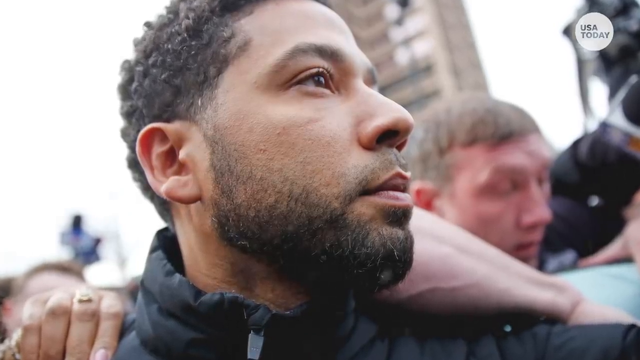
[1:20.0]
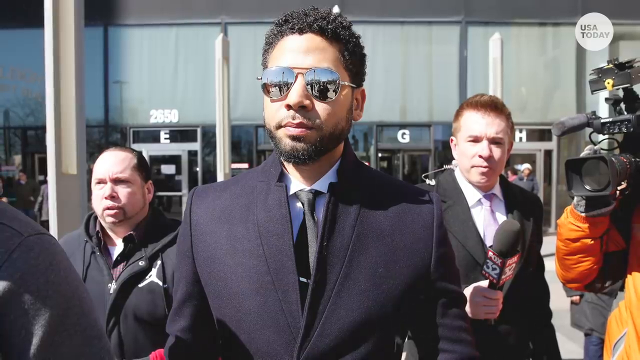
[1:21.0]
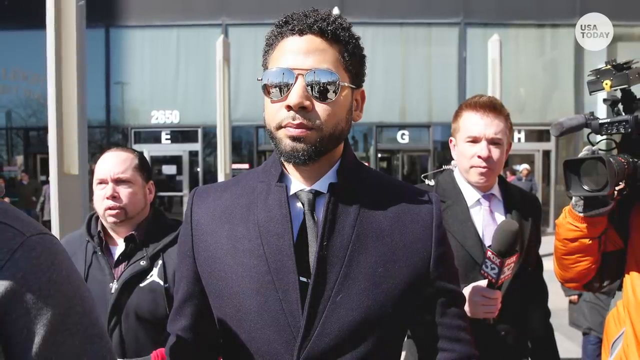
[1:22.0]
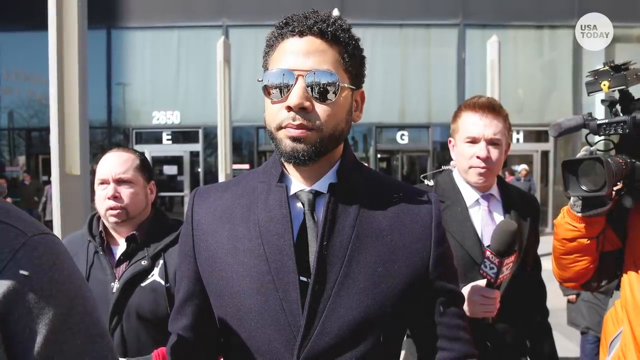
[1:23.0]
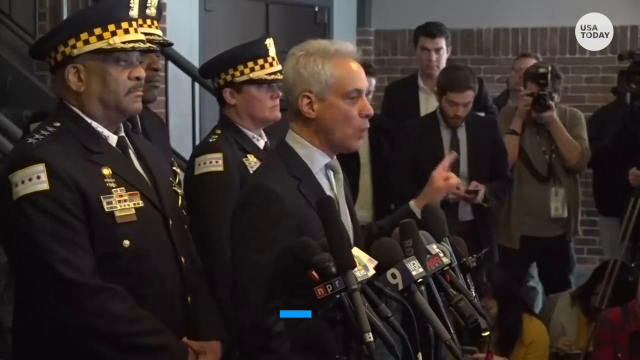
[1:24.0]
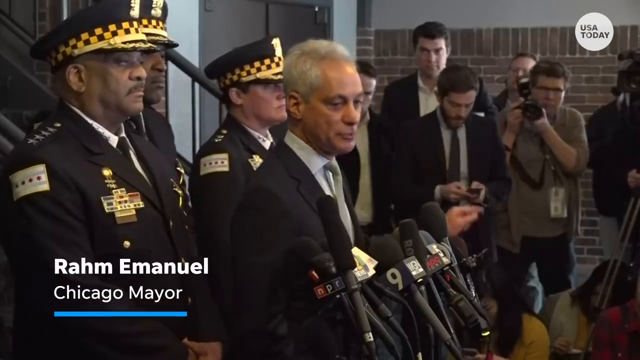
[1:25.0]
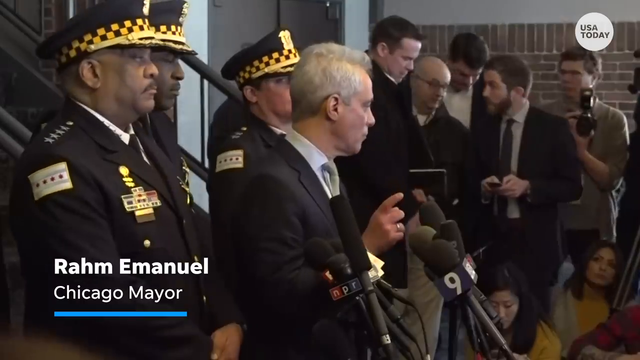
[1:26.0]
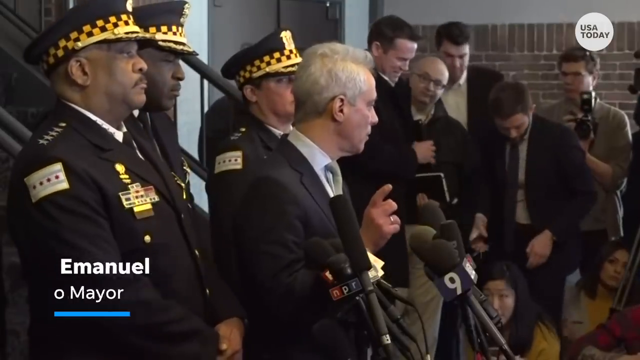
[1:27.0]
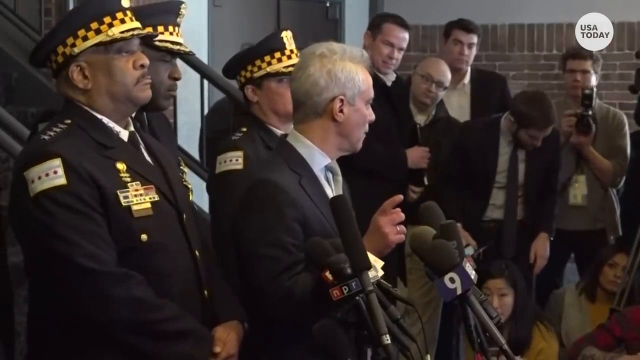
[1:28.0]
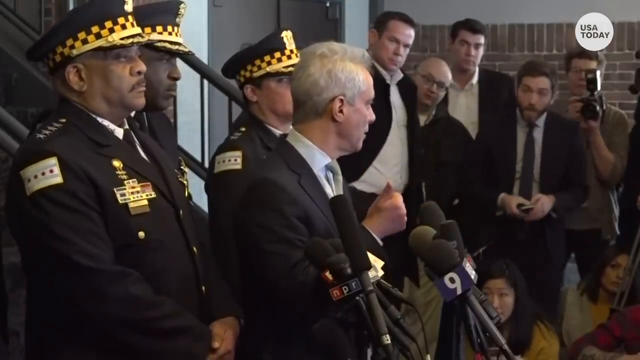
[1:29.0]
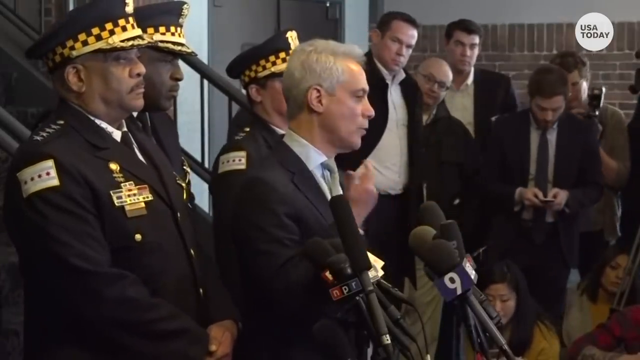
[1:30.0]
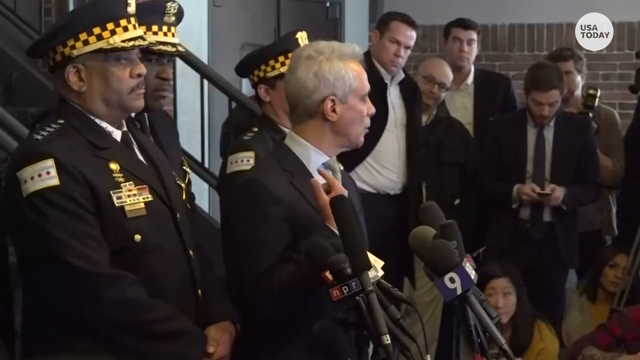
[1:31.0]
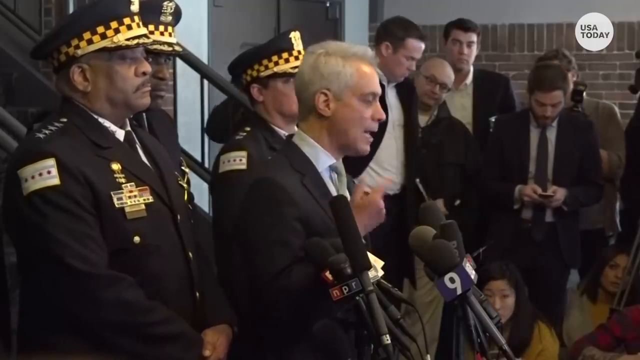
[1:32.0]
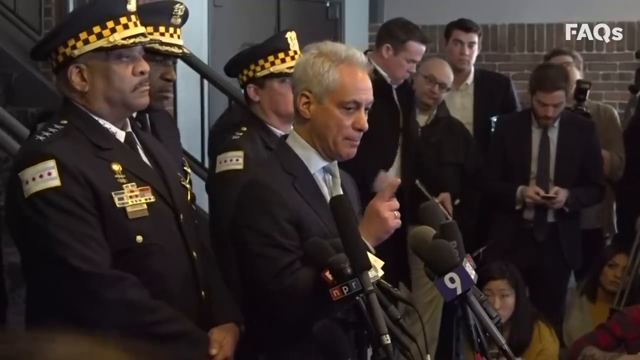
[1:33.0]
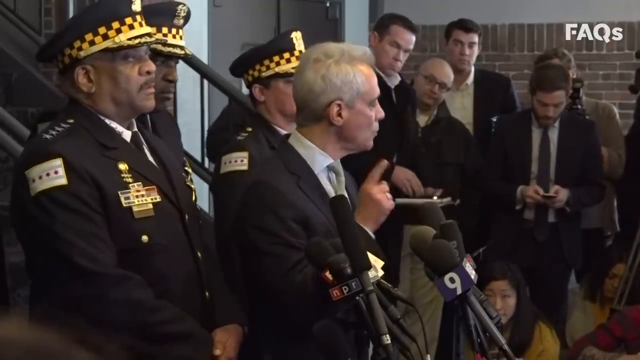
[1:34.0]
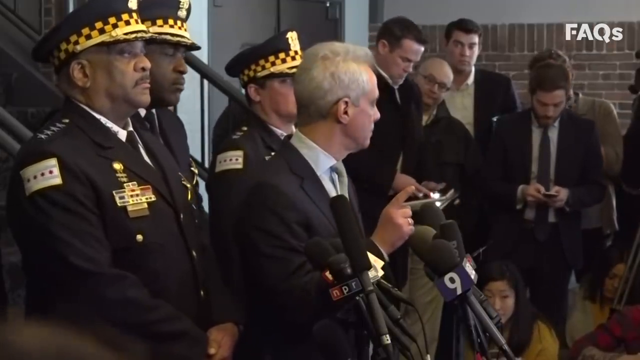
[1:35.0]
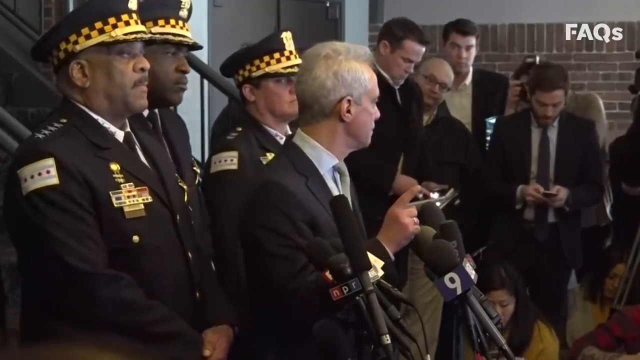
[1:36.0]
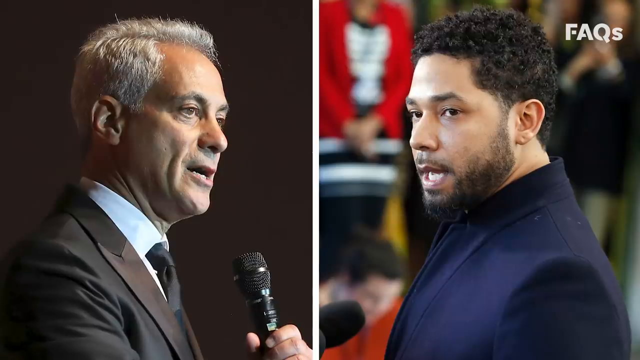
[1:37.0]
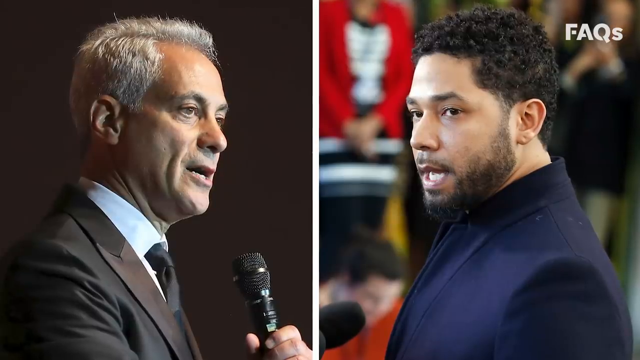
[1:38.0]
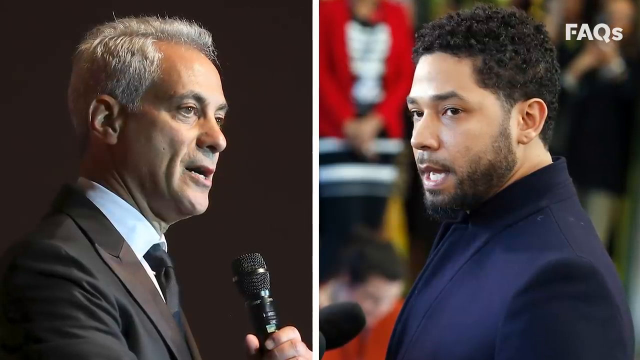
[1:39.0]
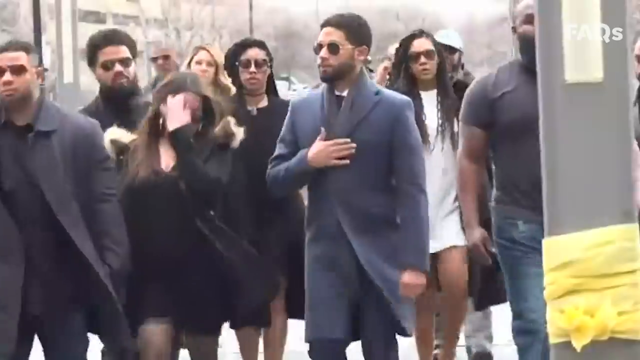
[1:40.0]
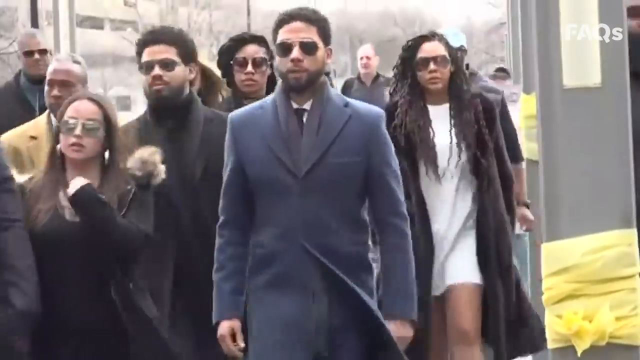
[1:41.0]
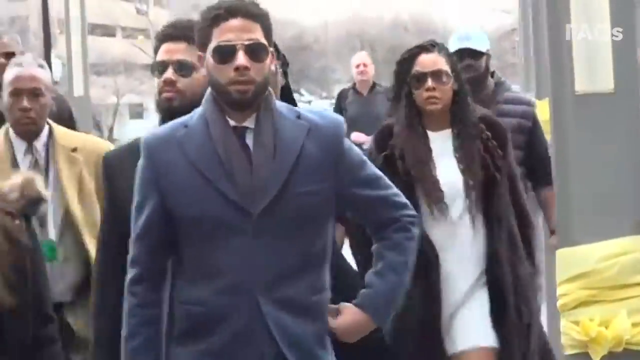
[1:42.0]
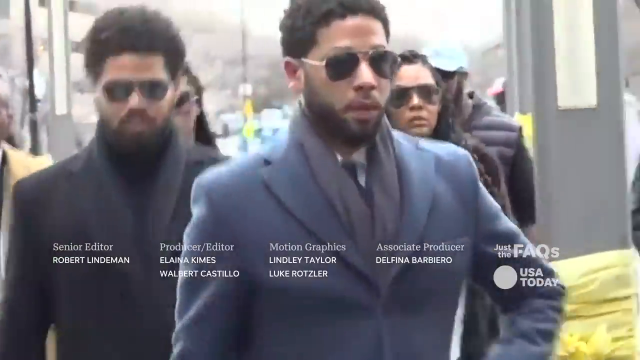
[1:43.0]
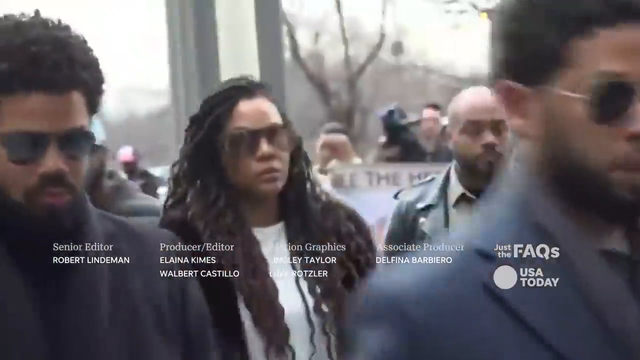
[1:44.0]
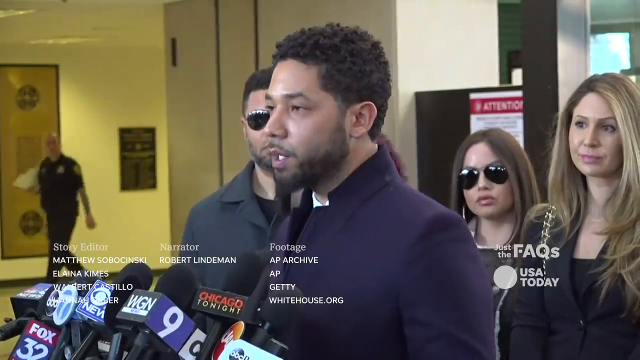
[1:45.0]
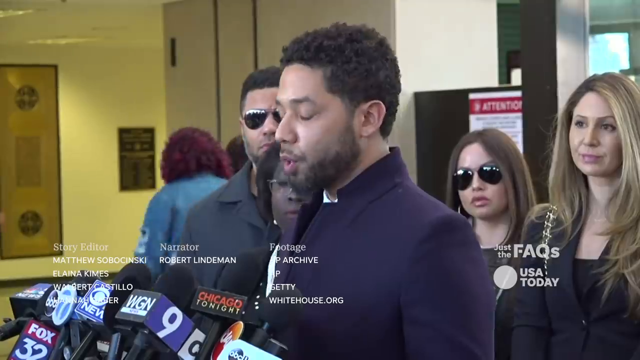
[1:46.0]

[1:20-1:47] From USA Today, a young black man, formally dressed, stands before media personnel, with reporters holding microphones and cameras looking on. He is in front of what looks to be a tall, big building with the street number 2650. The video transitions to the Chicago mayor, Rahm Emmanuel, giving a press conference that seems well attended judging by the number of microphones, while cameramen take pictures of him. He has a stern face and, from his body language, seems to be putting a strong comment across. Police officials with medals on look on in the background, paying close attention. Pictures of Rahm Emmanuel and the young black man are then shown, suggesting the two seem to be going head to head. The young black man then walks down the street with other people following him. It seems to be a cloudy, cold day.